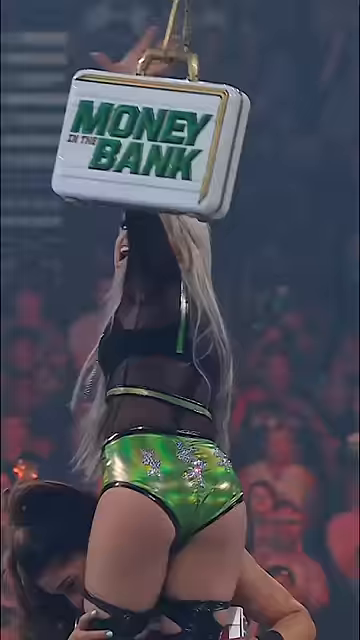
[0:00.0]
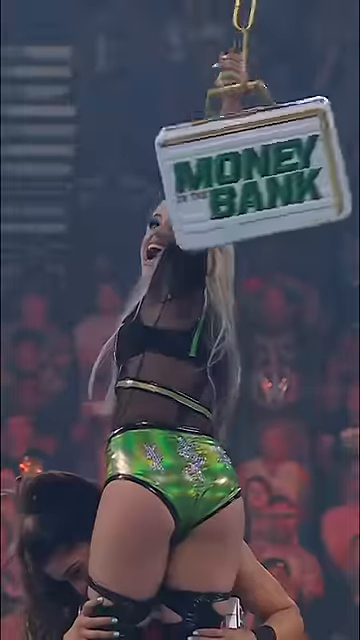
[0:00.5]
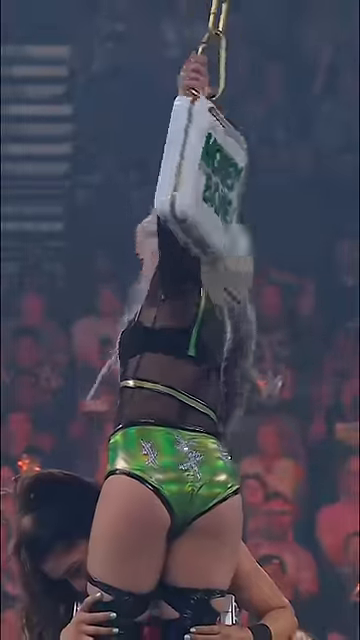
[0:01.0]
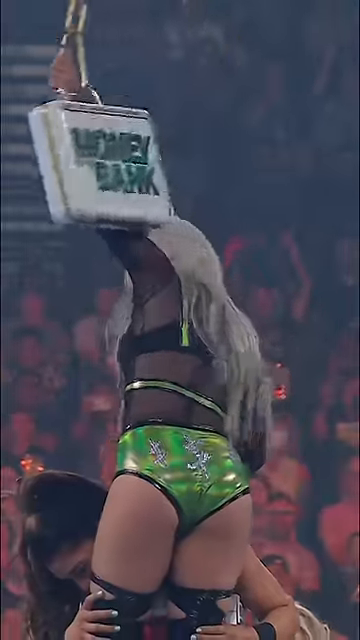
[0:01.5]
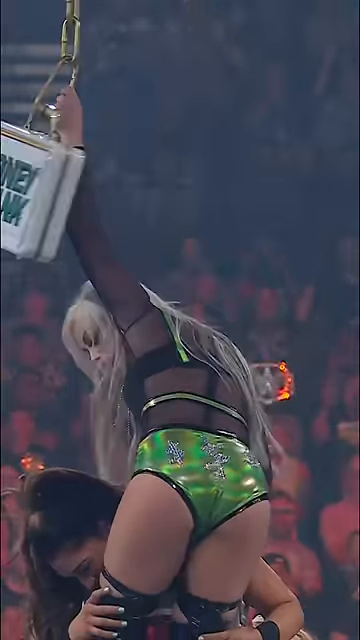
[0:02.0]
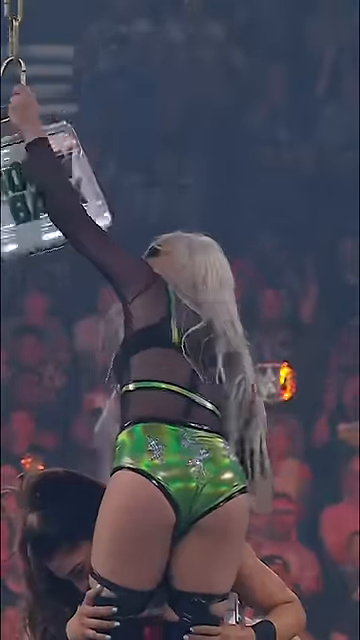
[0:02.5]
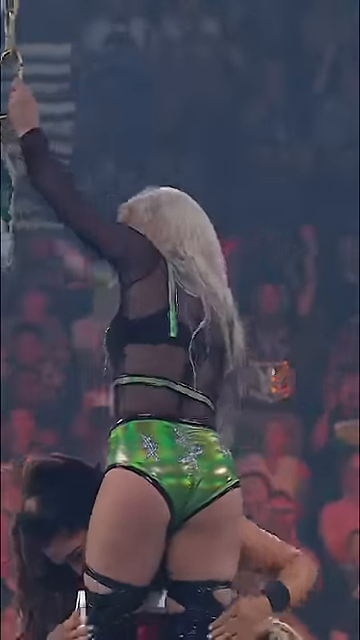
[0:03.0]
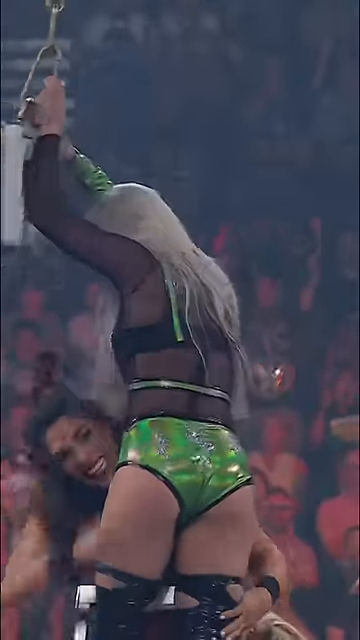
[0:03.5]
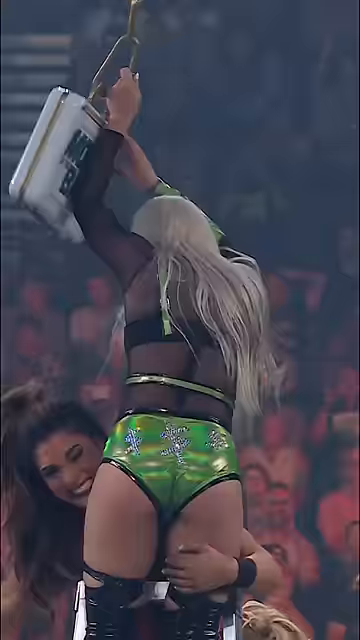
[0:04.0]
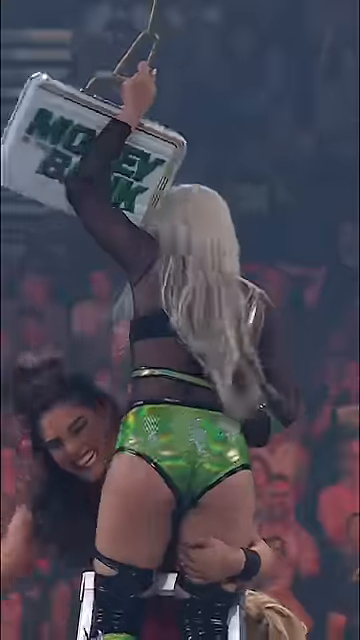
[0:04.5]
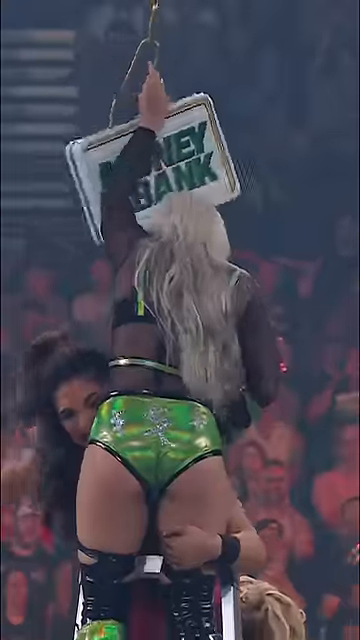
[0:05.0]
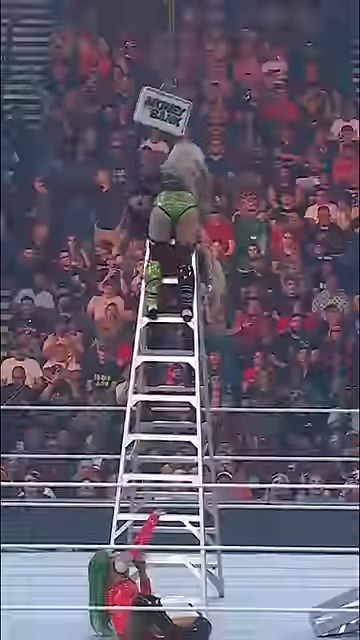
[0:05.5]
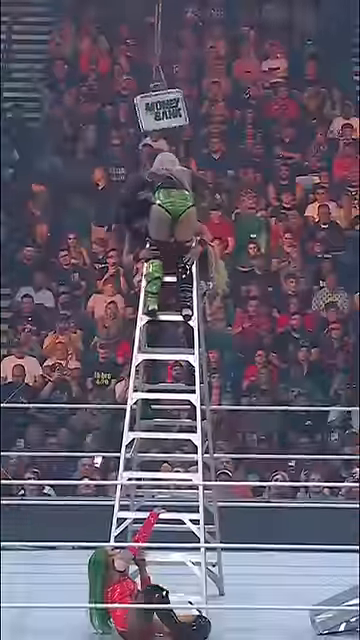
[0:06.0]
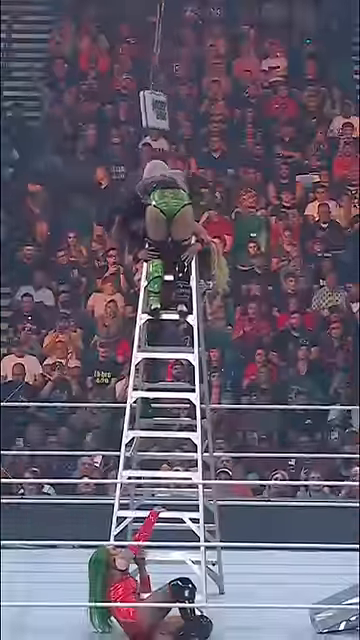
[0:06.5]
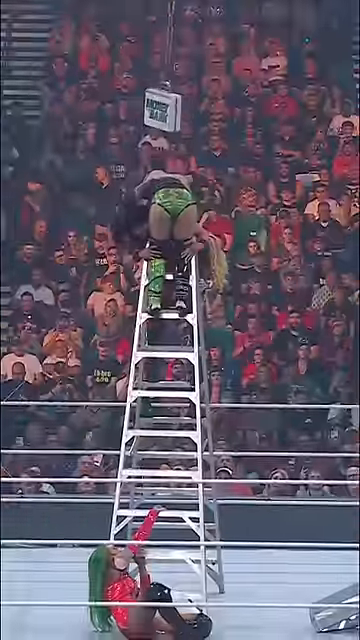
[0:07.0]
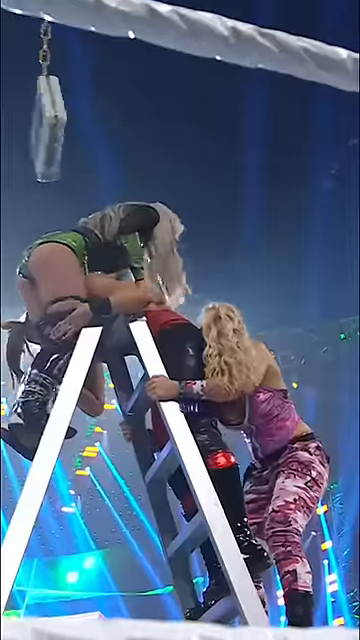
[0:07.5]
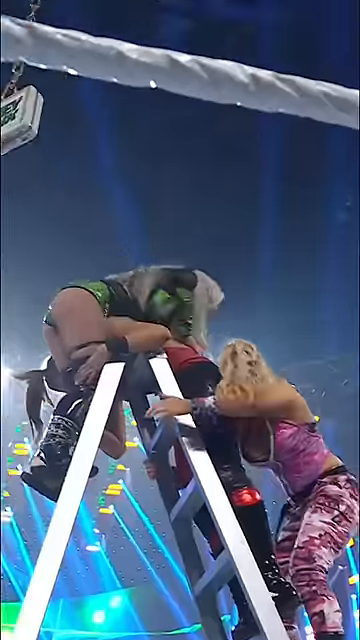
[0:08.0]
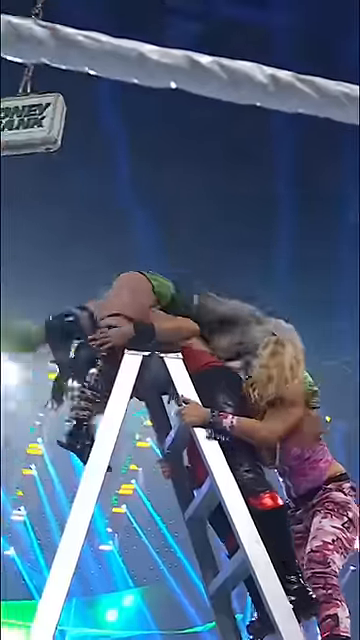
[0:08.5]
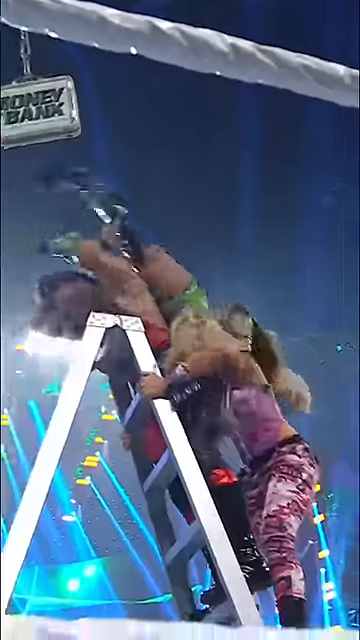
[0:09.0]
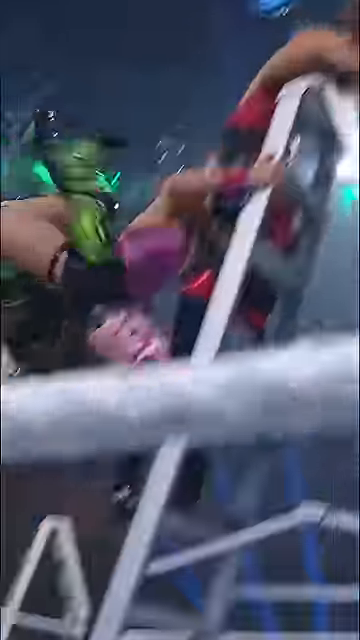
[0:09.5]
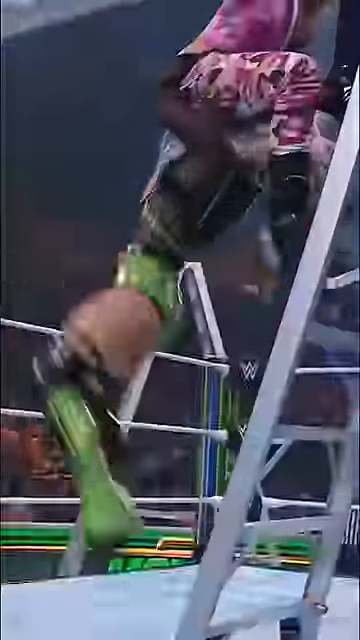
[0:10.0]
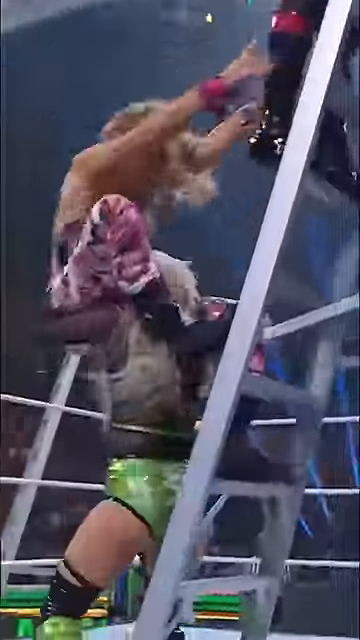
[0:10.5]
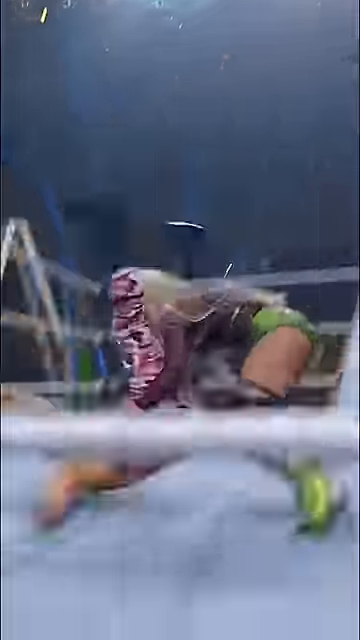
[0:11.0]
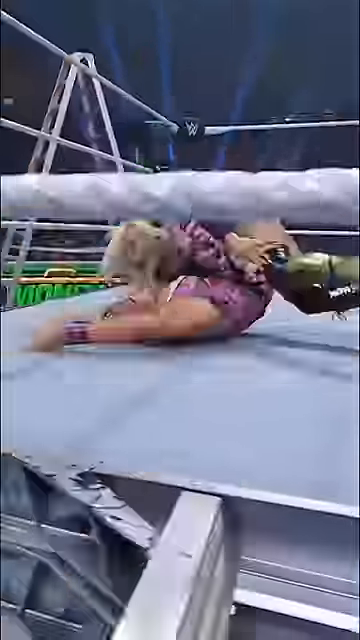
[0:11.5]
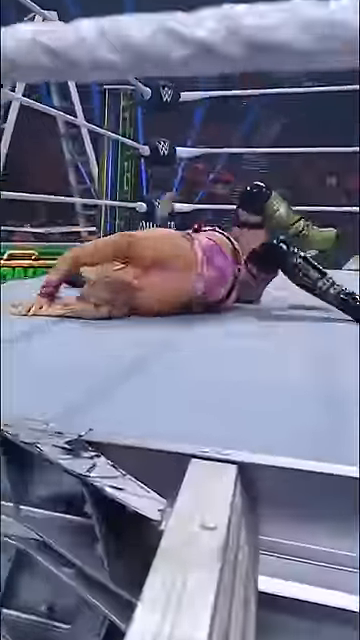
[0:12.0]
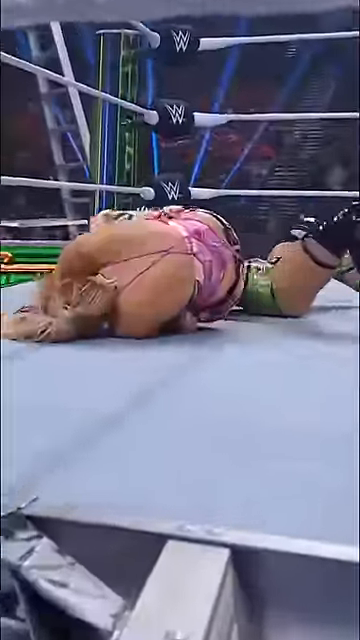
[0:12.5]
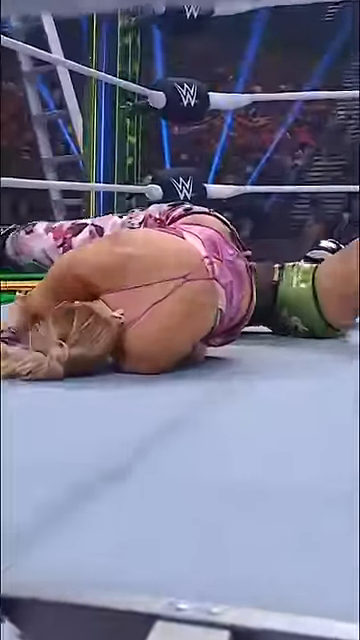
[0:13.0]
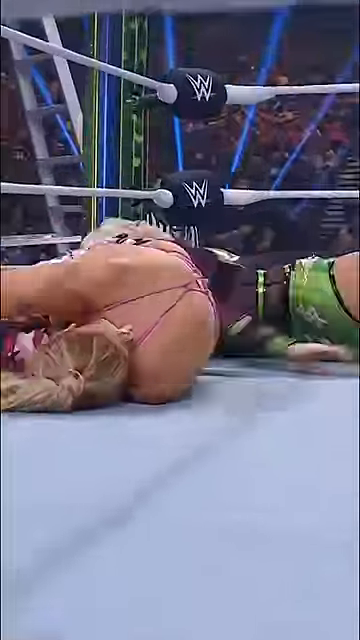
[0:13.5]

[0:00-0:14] A women's wrestling match is underway. The first wrestler visible wears green spandex bottoms, high boots and a mesh top, and has long blonde hair. She is reaching up to hold a sign that says "money in the bank," with "money" and "bank" in big green letters; it looks like a briefcase hanging from a rope off the ceiling. Another wrestler with long brown hair is holding the blonde wrestler's legs and starts to hit her lower back. The crowd in the background is lit by red lights. The camera then zooms out, revealing that there are actually three wrestlers on top of a step ladder. The wrestler in green flips over the brown-haired wrestler and grabs a third wrestler wearing a pink patterned suit. She rolls down the opposite side of the ladder, pulling the wrestler in pink down with her and slamming her into the floor of the ring.